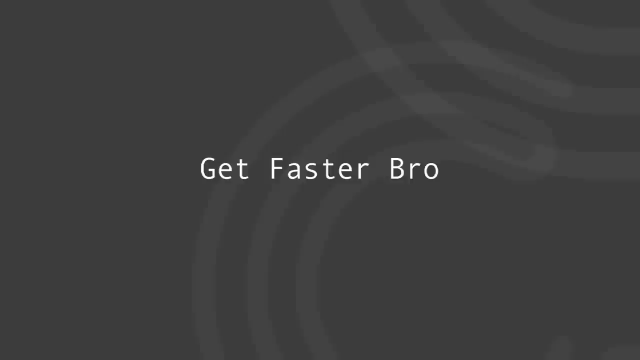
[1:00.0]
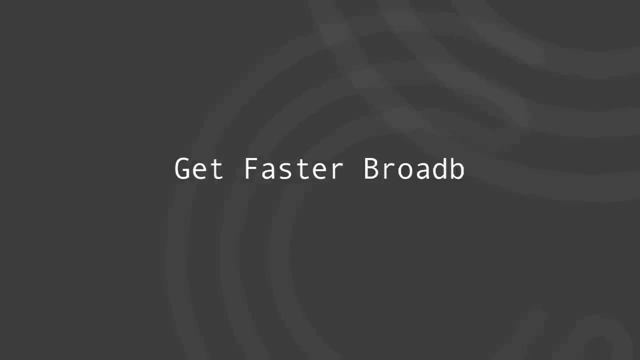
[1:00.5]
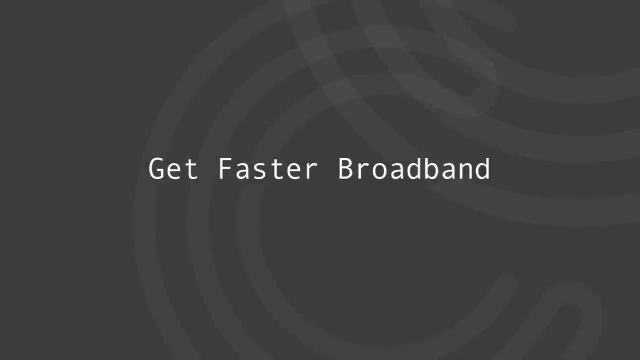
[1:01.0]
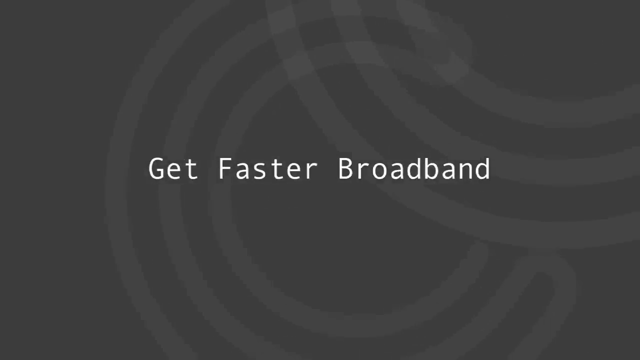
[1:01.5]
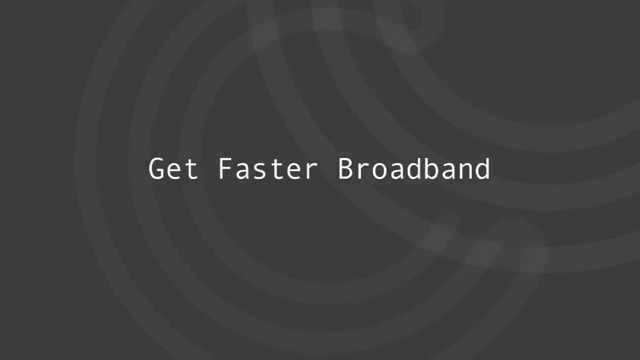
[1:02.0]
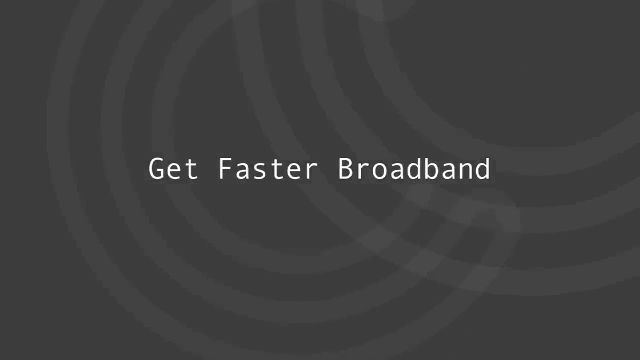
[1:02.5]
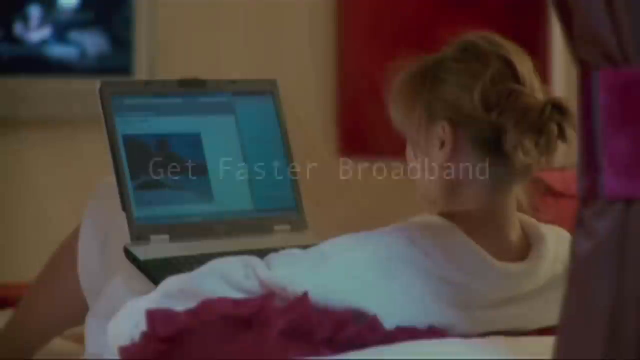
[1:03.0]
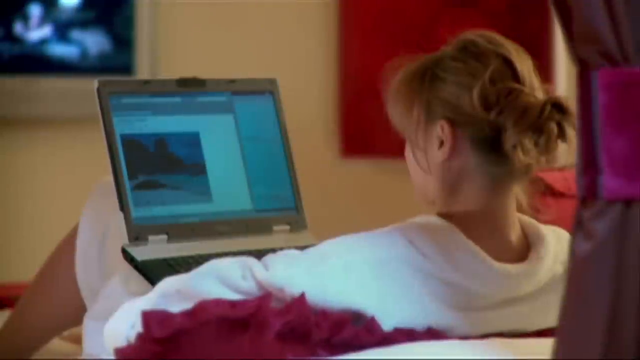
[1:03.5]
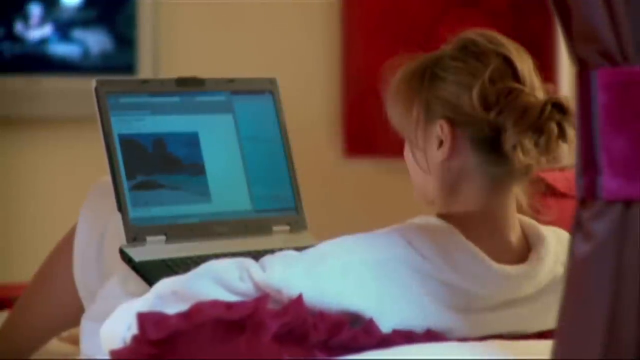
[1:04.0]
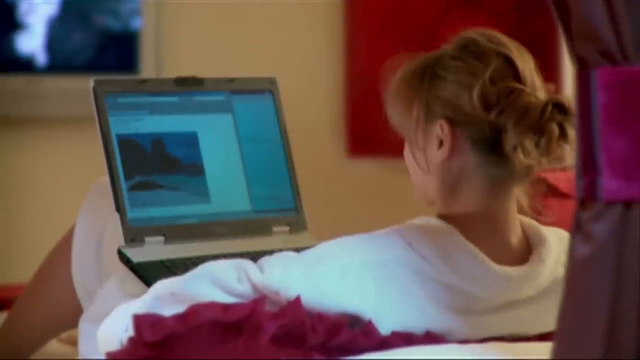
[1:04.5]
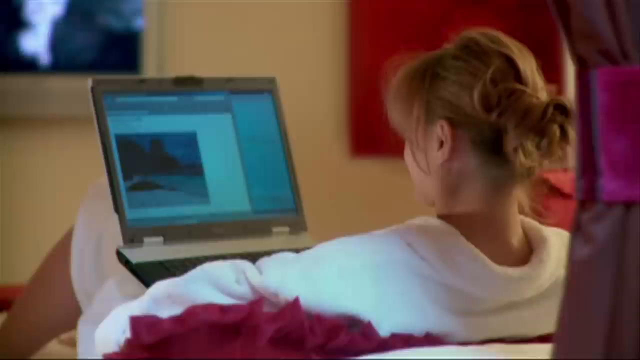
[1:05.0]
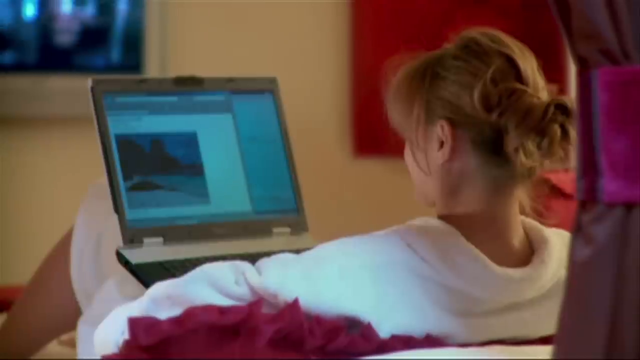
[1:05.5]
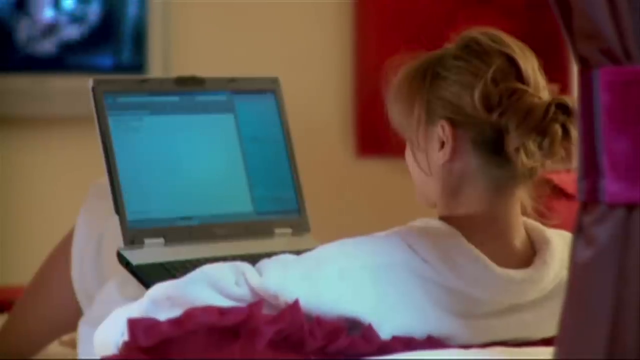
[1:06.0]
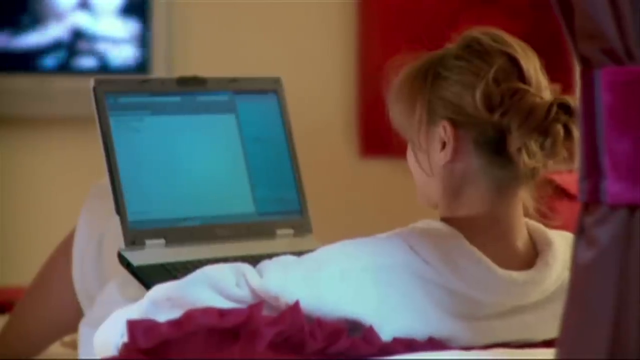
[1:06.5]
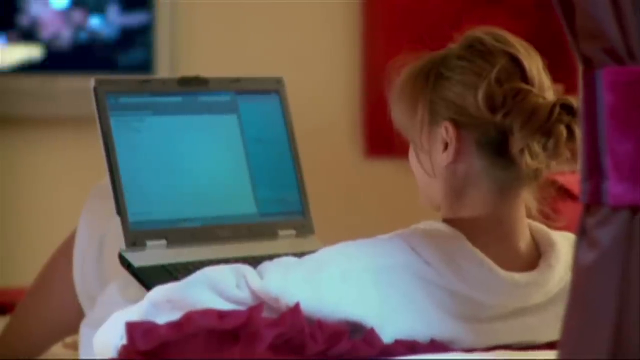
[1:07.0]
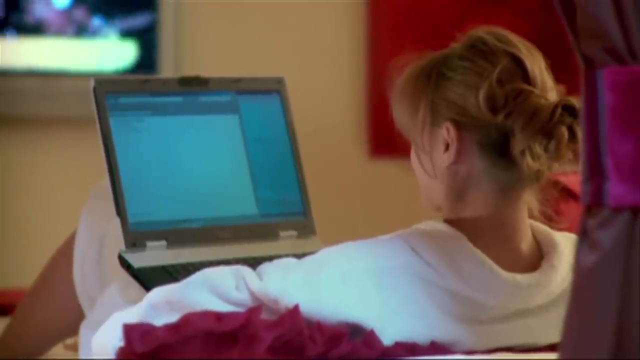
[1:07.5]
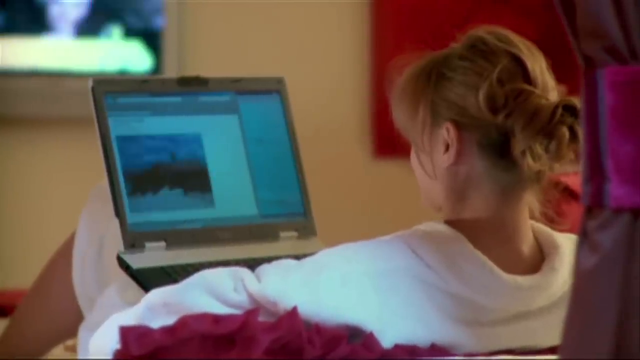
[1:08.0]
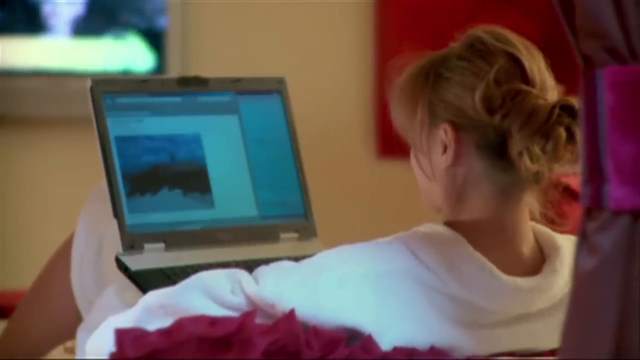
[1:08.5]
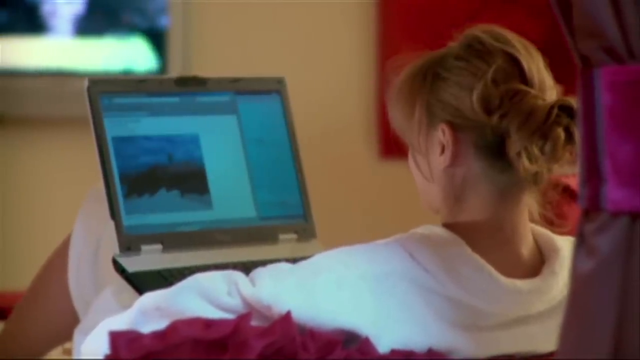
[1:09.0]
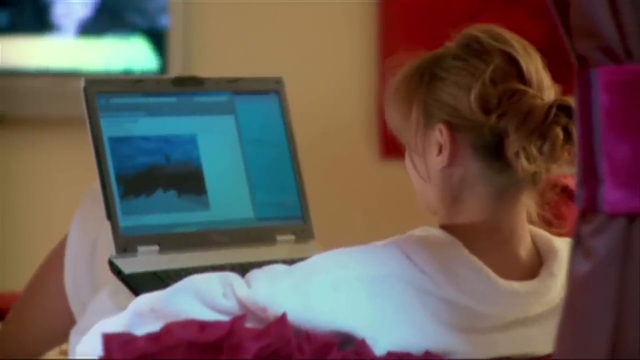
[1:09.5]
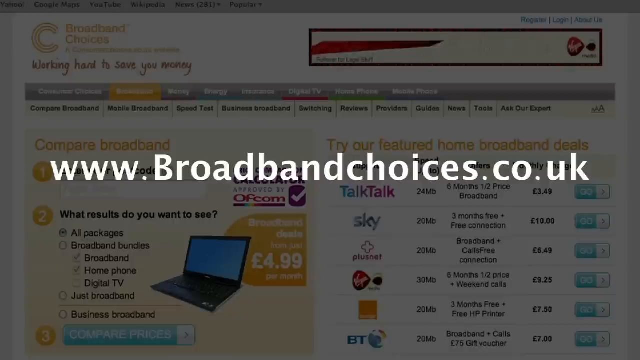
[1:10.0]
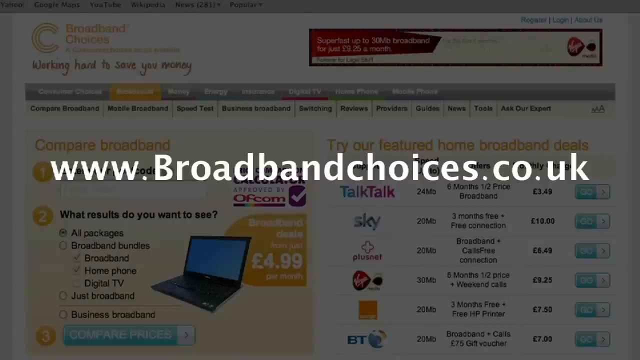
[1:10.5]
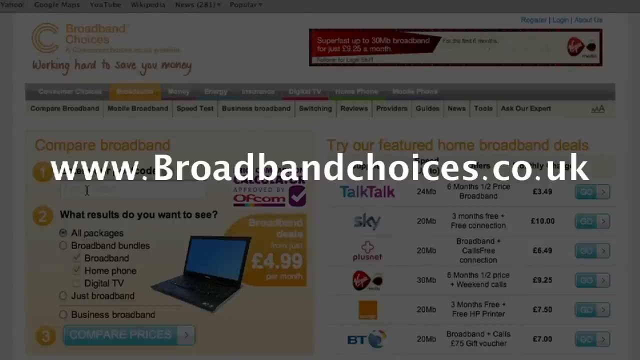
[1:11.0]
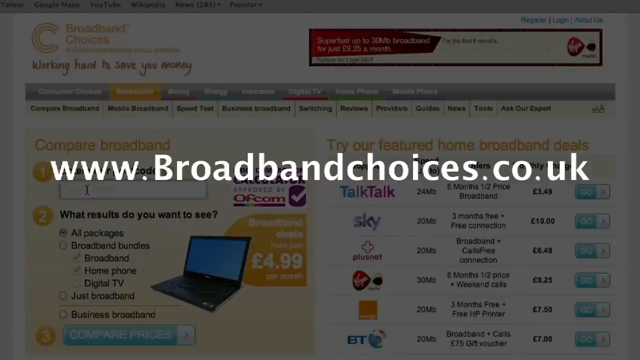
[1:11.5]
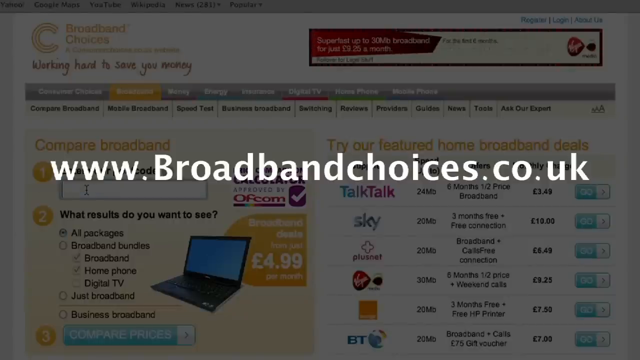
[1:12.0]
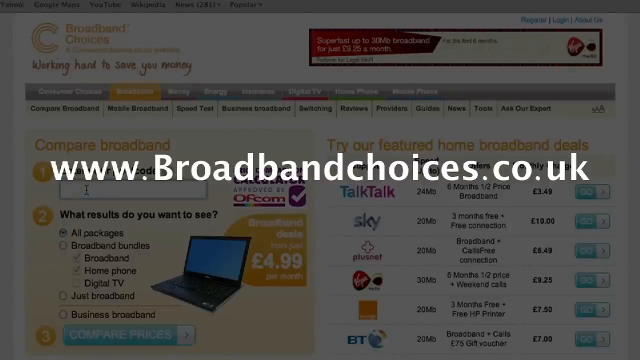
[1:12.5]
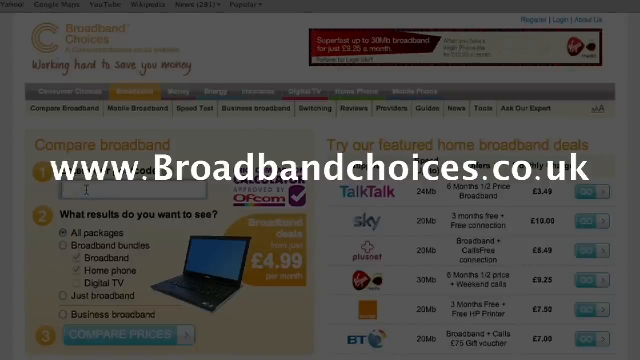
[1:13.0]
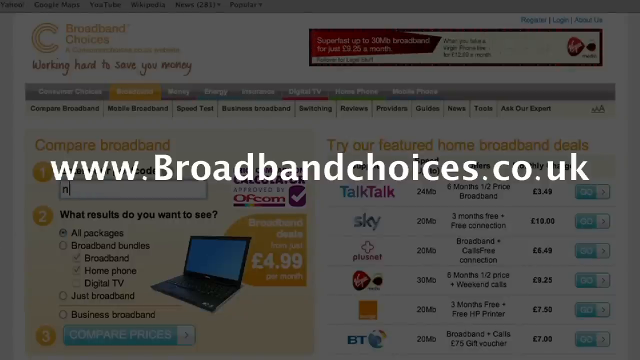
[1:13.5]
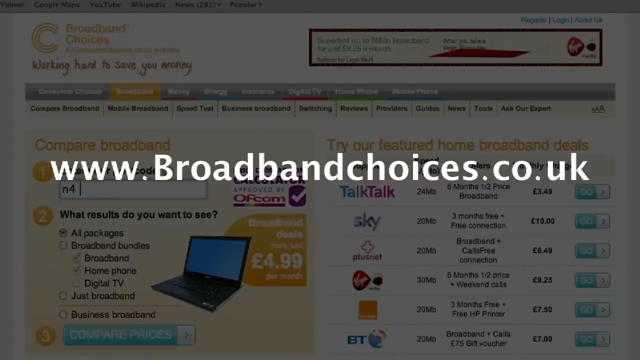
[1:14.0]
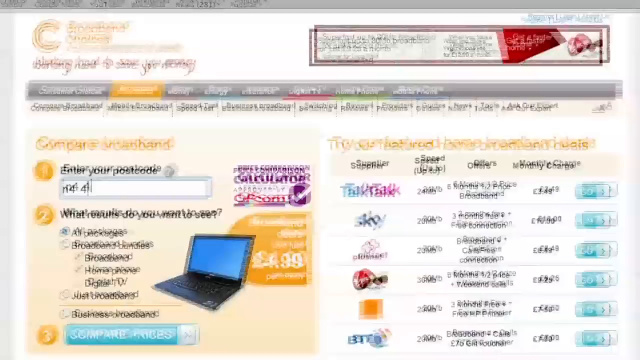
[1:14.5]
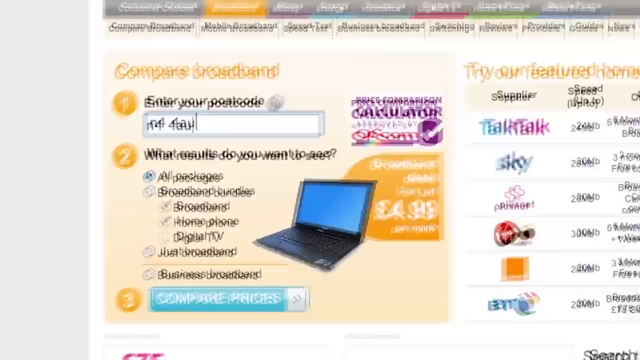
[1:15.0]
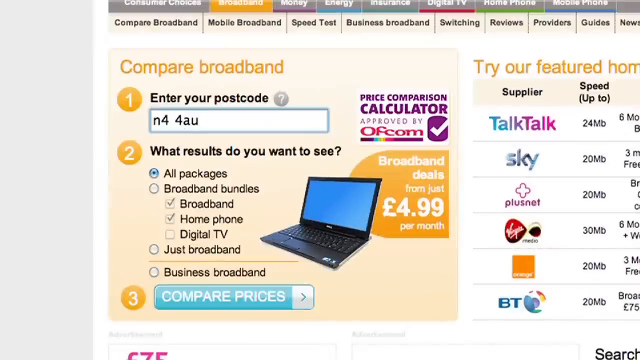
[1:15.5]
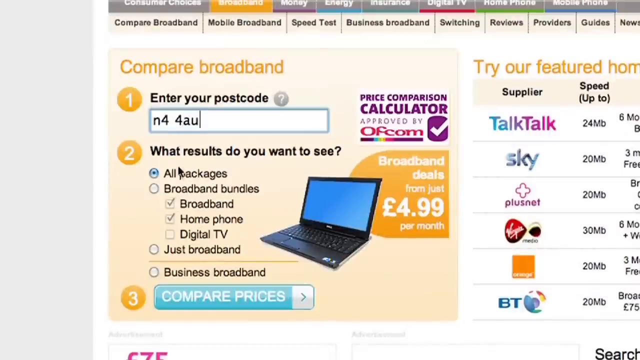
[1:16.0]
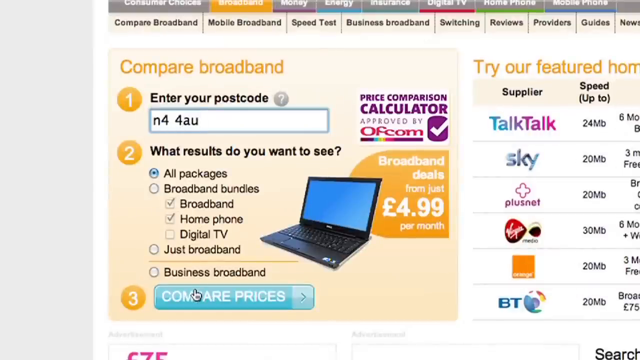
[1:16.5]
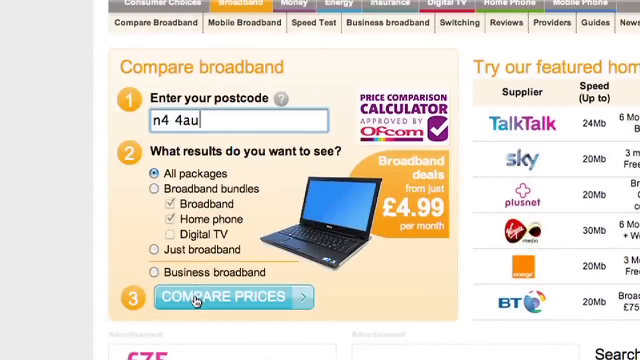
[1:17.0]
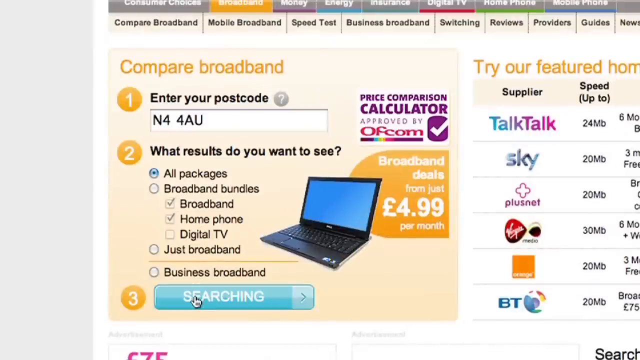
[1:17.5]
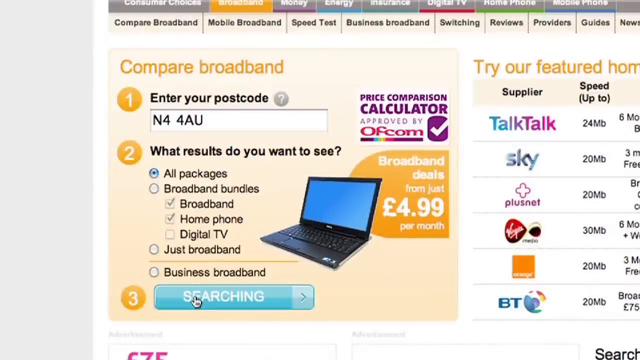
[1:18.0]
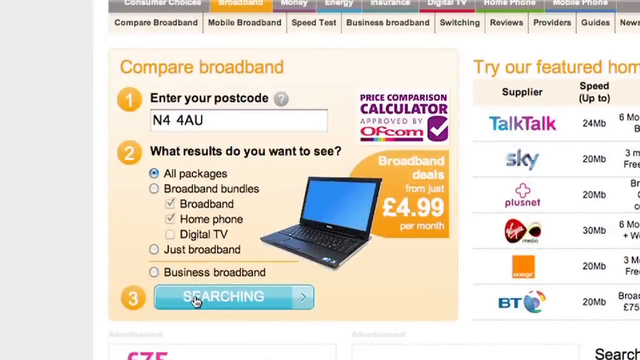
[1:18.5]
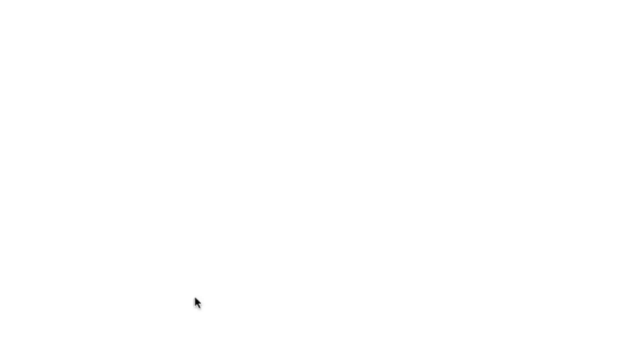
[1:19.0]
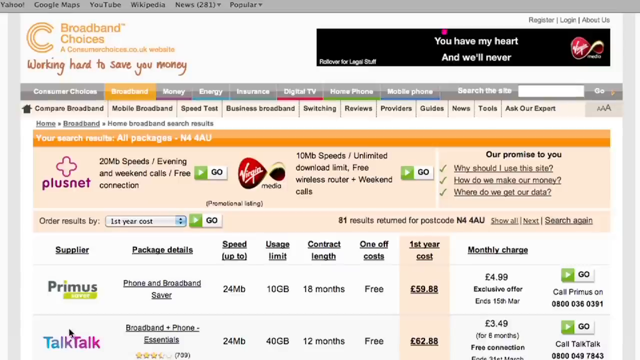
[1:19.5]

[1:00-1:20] A lady in a white shirt sits in a living room facing the television, with a laptop on her lap. She is on the broadbandchoices.uk site comparing prices, ticking the packages she would like. On the site there is a picture of a laptop with a price of 4 pounds, and the packages the site offers. She ticks the broadband bundle and home phone columns. A code, N44AU, is entered before she compares the prices. Other options on the site include digital TV and normal broadband.